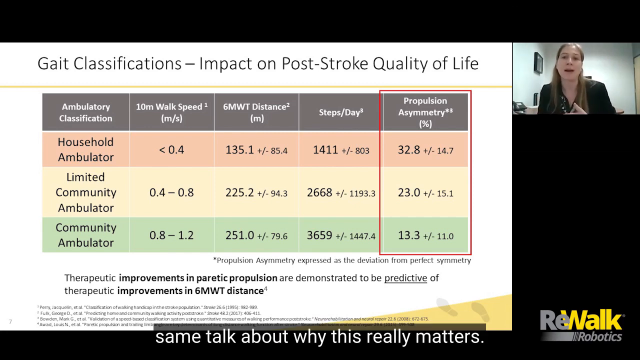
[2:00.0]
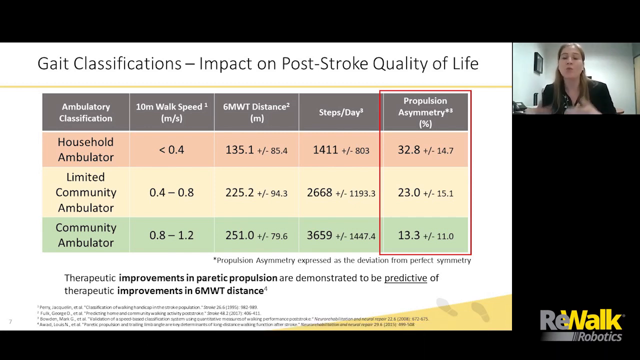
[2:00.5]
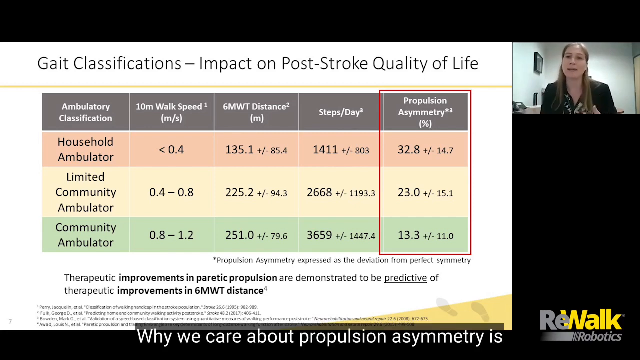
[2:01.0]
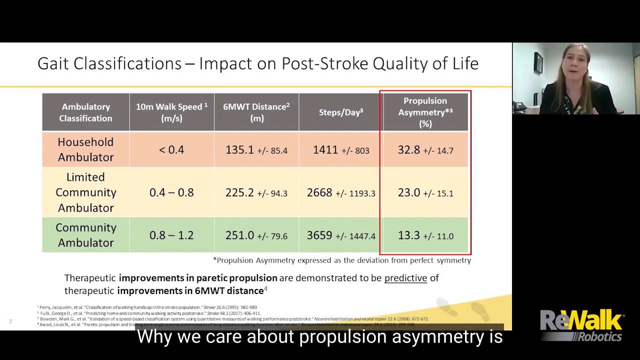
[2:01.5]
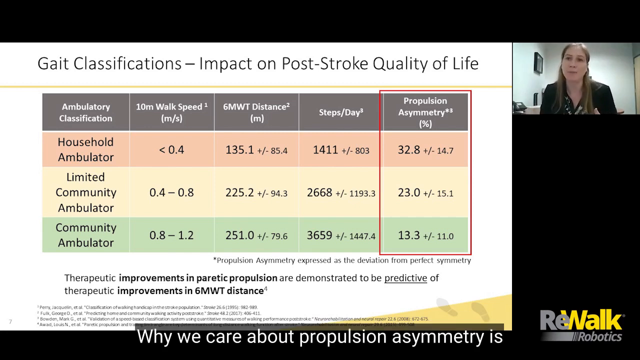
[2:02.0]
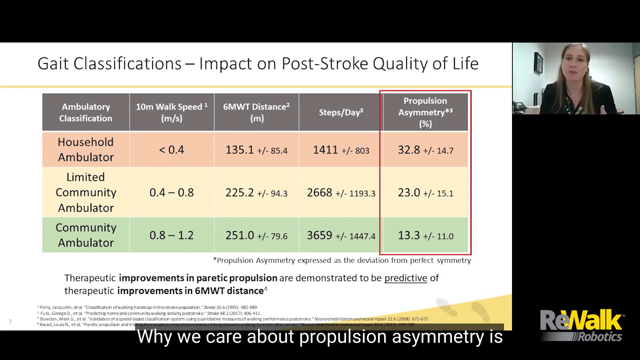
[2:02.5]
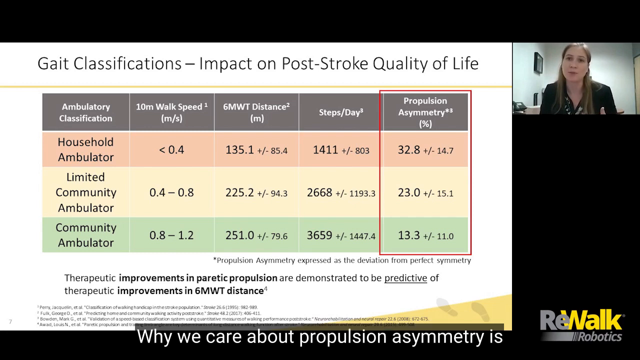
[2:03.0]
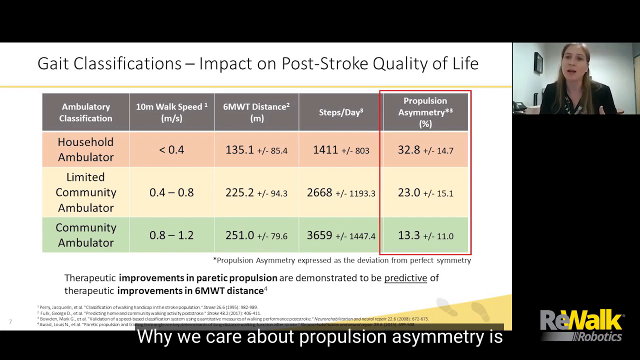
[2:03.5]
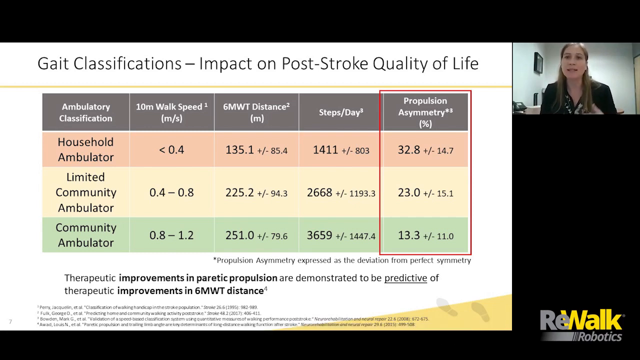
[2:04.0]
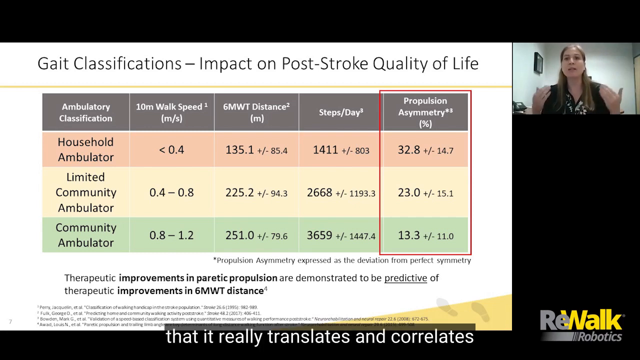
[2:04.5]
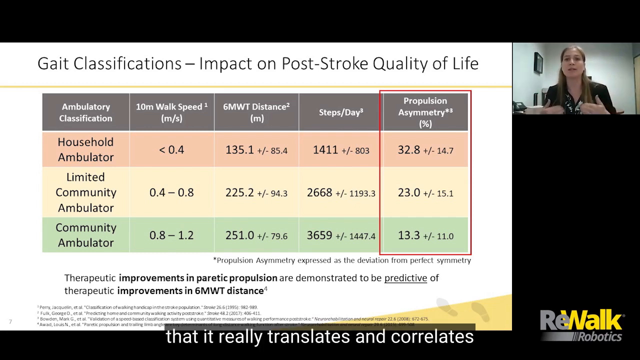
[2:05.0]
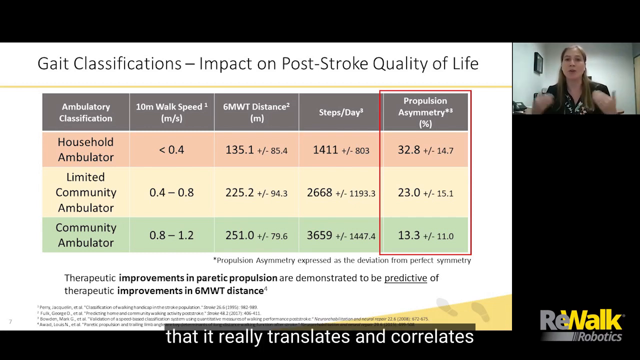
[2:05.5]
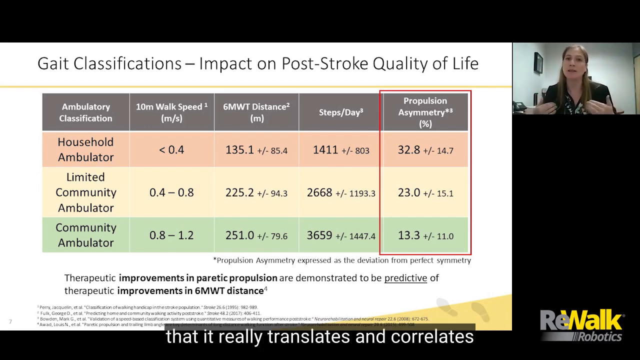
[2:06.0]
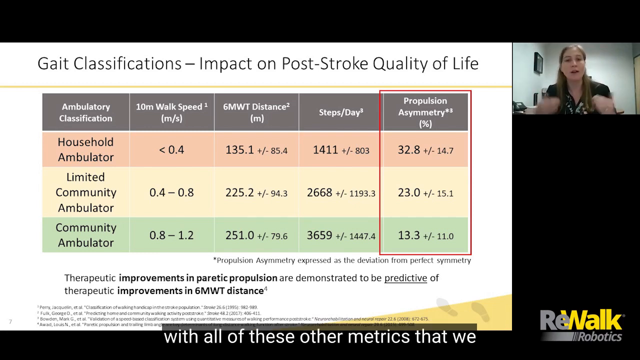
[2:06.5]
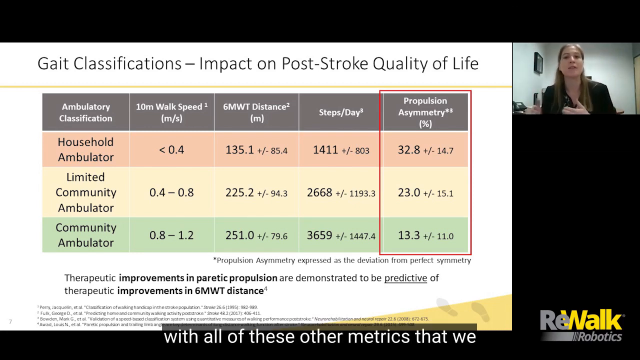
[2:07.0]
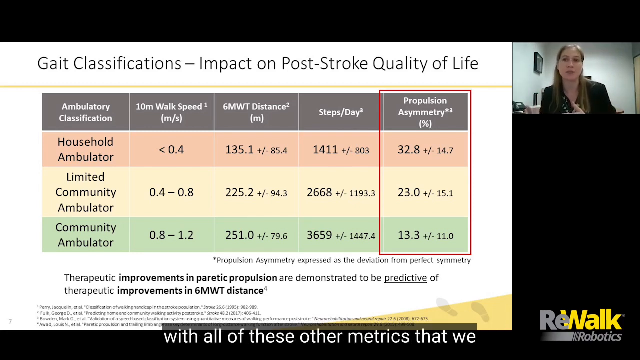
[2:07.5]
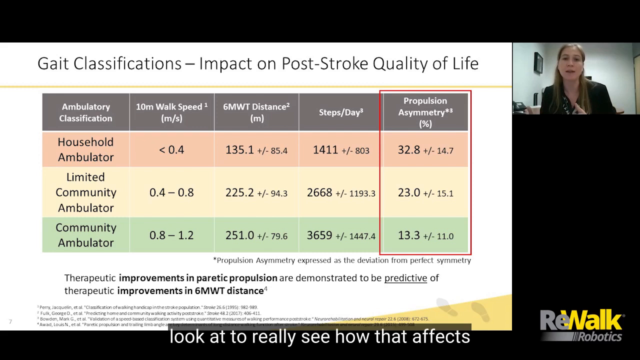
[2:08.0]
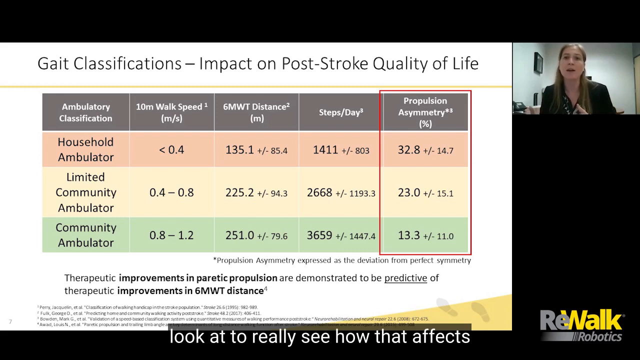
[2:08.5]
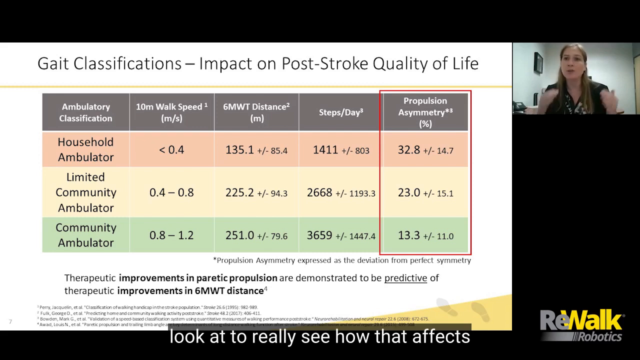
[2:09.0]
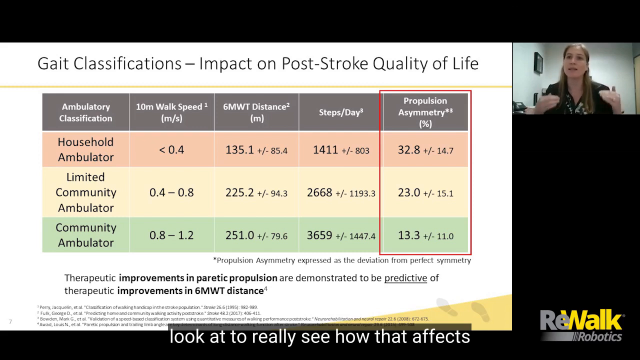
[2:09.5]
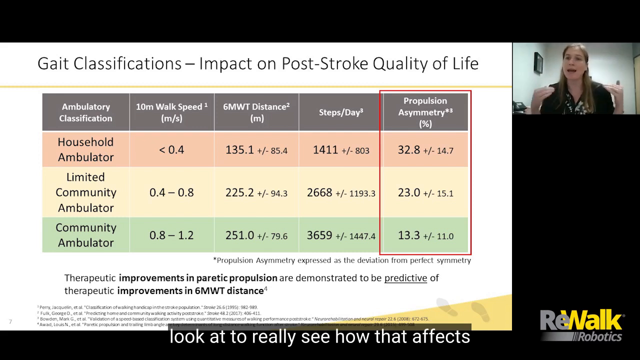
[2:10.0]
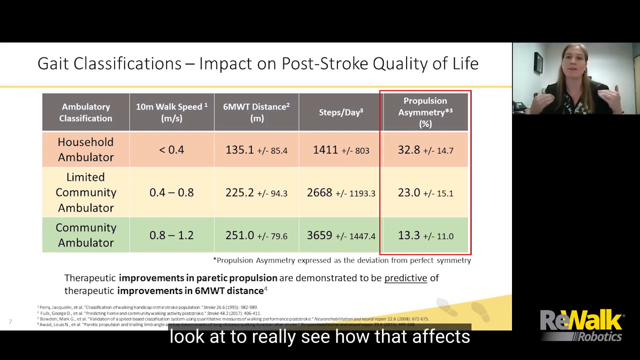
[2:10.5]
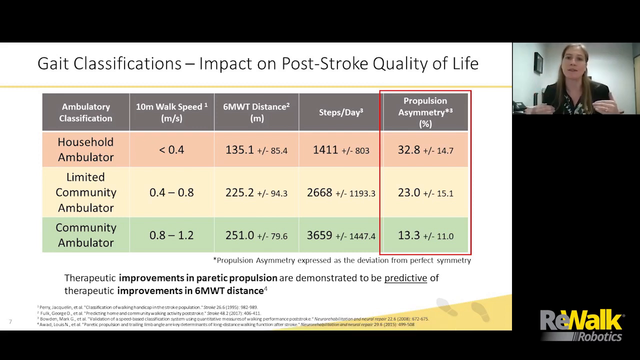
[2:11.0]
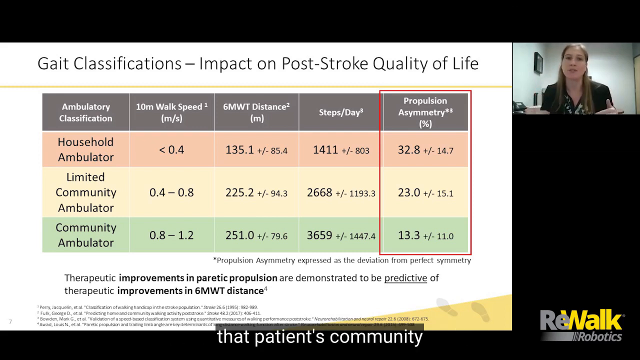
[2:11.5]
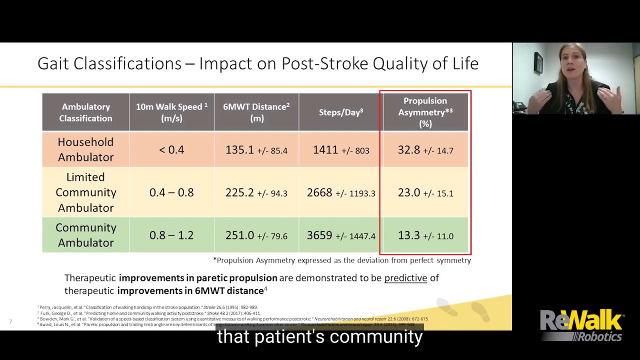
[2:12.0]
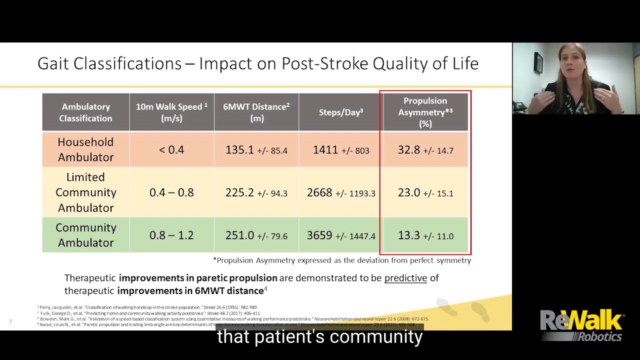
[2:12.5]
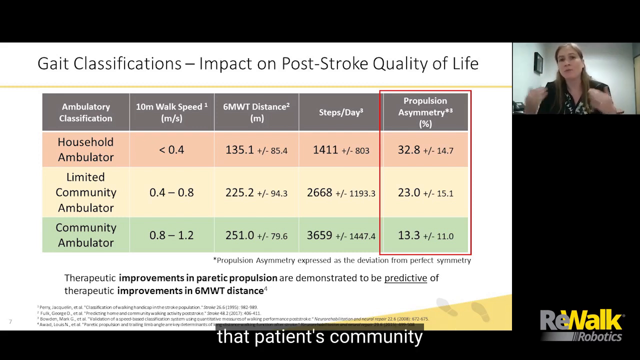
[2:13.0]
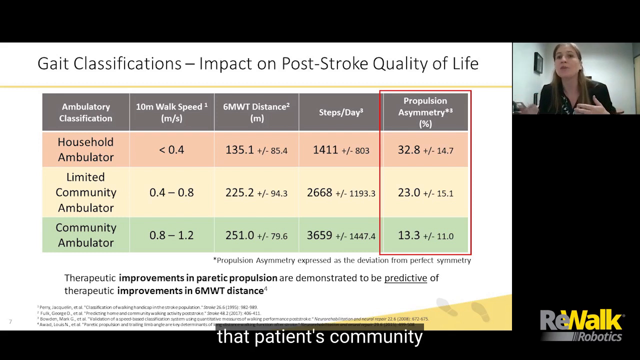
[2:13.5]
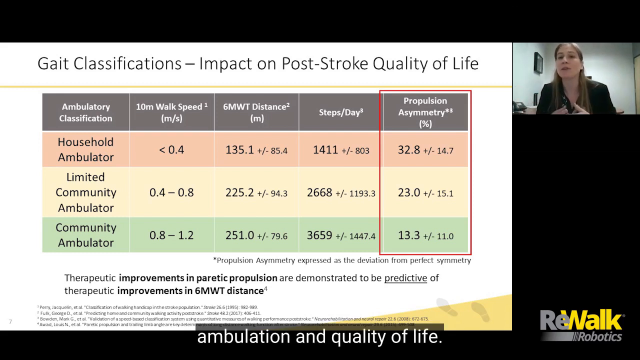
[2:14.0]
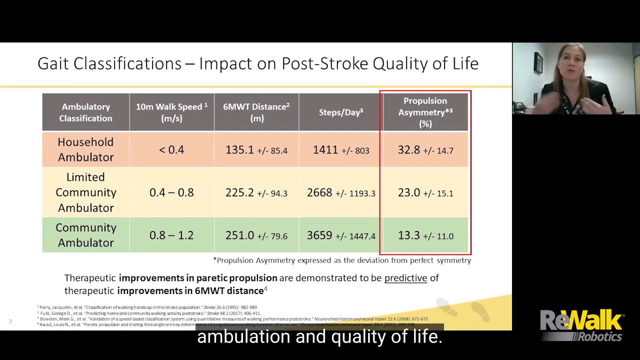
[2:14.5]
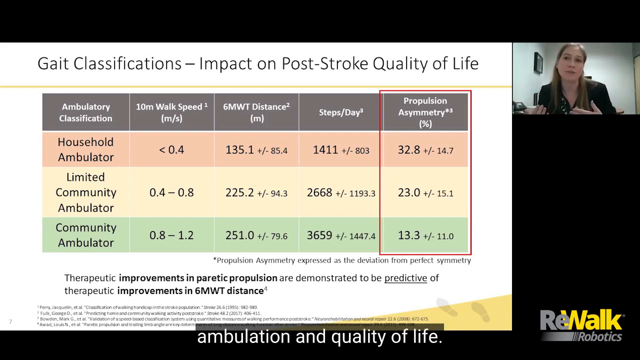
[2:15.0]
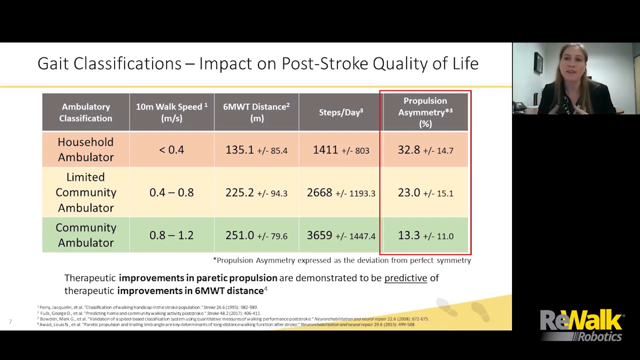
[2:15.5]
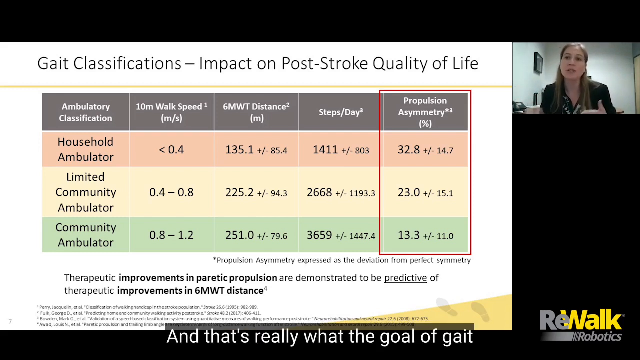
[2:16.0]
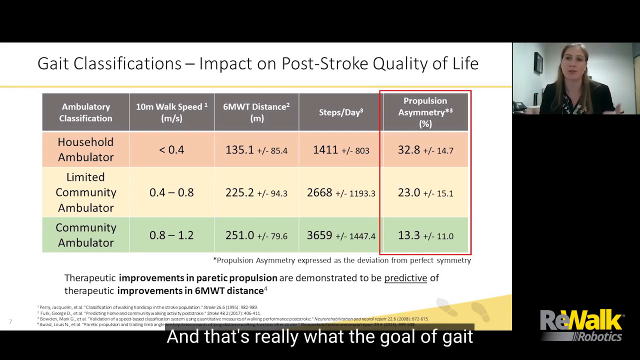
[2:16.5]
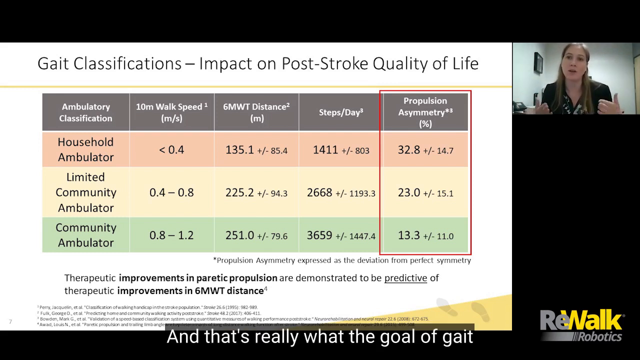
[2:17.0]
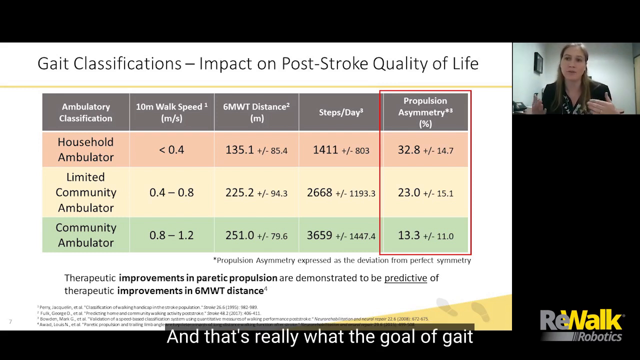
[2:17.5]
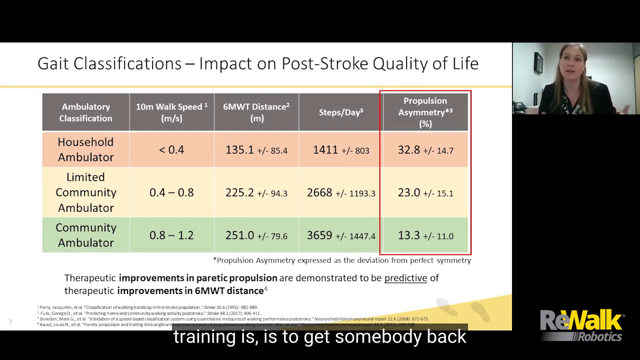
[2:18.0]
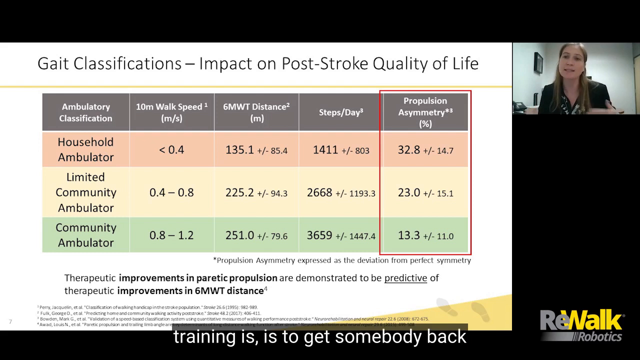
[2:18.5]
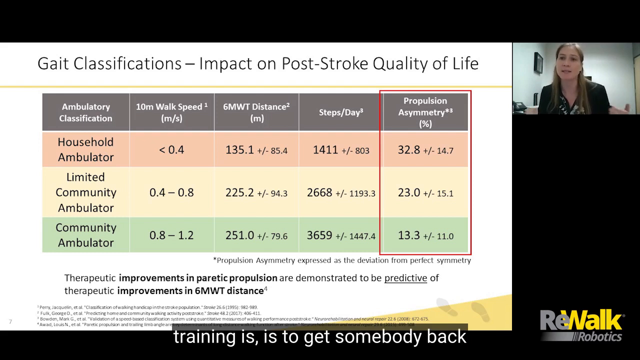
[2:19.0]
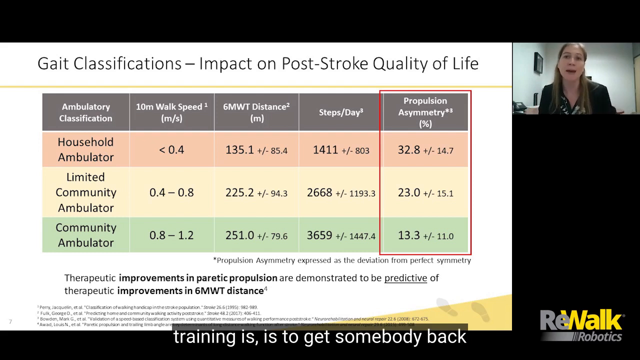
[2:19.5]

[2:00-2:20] A gait classification chart about quality of life lists the ambulatory classification, 10 meter walk speed in meters per second, 6MWT distance in meters, steps per day, and propulsion asymmetry, with rows for household ambulatory, limited community ambulatory, and community ambulatory. A woman in the top right is on a video call, and the presentation is credited to Rewalk Robotics. The chart shows walk speed below 0.4 for household ambulatory, 0.4 to 0.8 for limited community ambulatory, and 0.8 to 1.2 for community ambulatory; steps per day are 3,500 for community ambulatory, 2,500 for limited, and 1,500 for household.